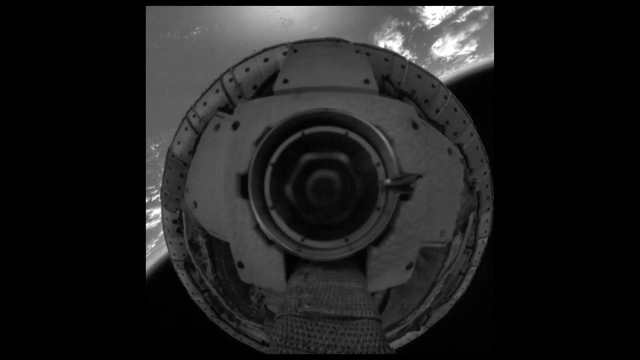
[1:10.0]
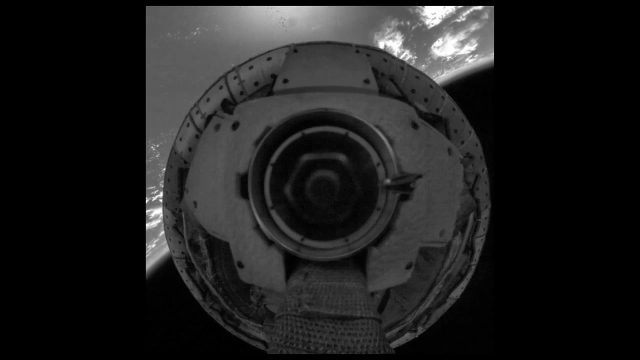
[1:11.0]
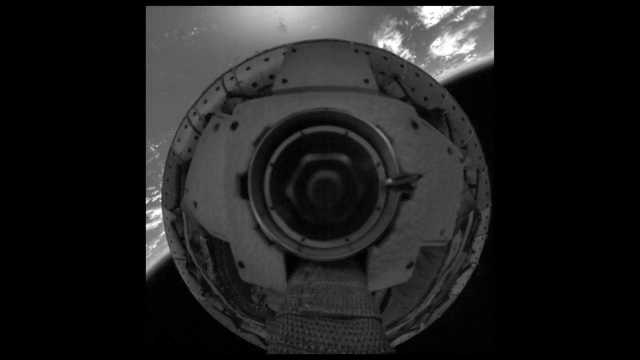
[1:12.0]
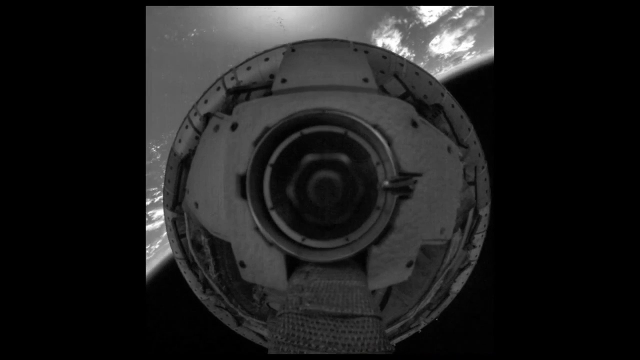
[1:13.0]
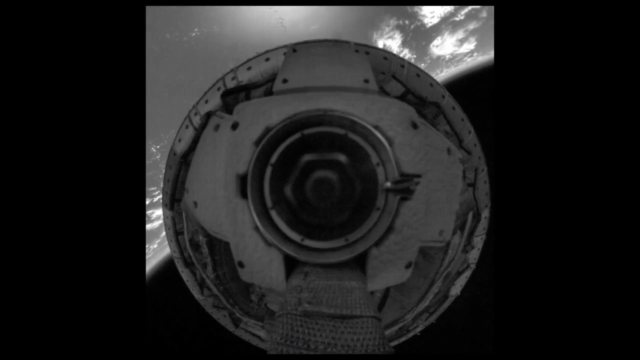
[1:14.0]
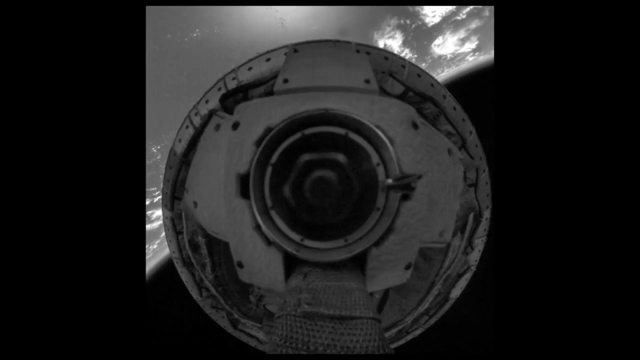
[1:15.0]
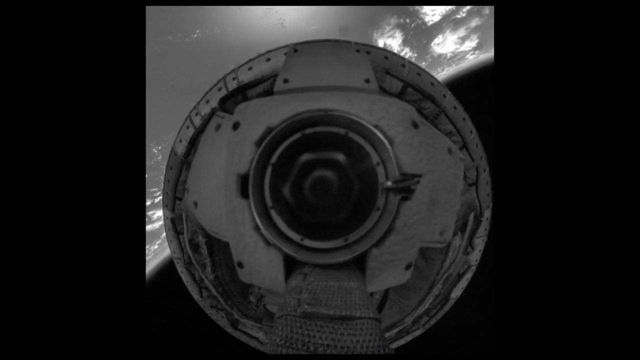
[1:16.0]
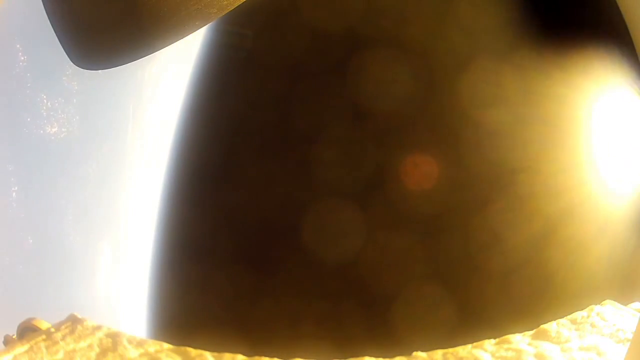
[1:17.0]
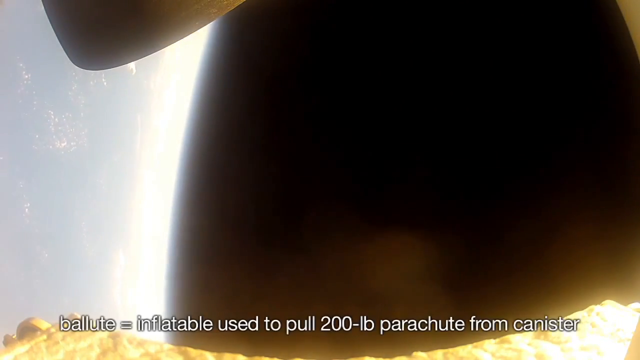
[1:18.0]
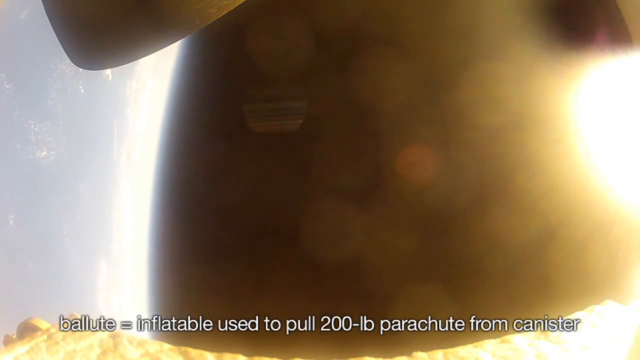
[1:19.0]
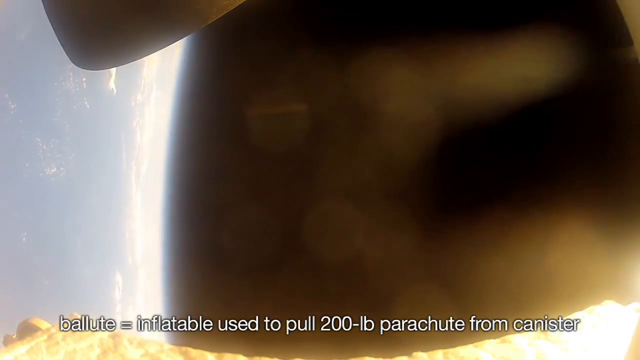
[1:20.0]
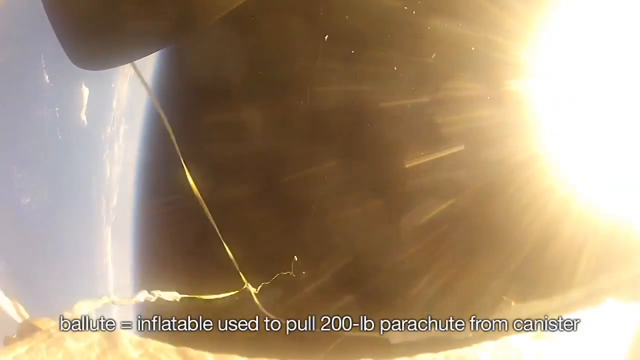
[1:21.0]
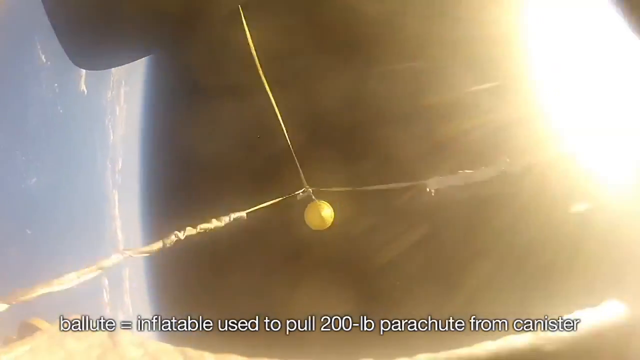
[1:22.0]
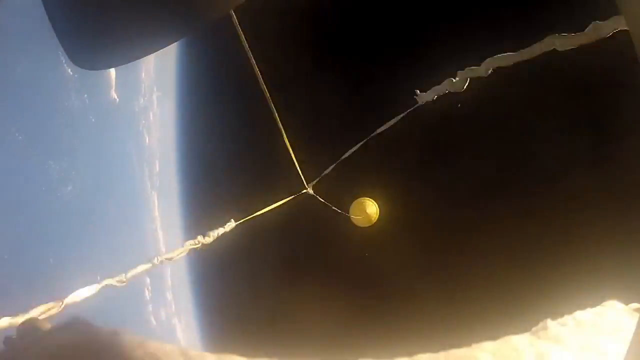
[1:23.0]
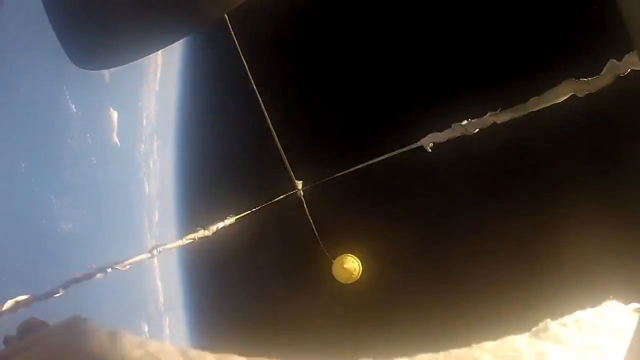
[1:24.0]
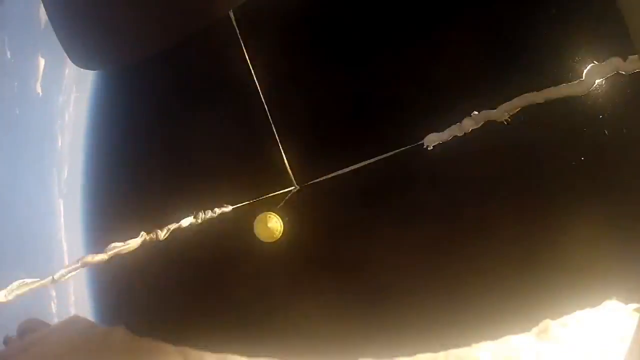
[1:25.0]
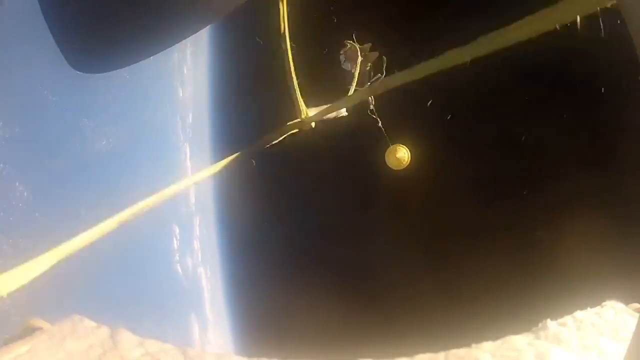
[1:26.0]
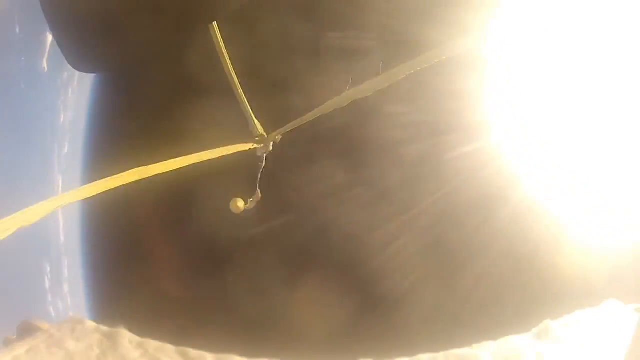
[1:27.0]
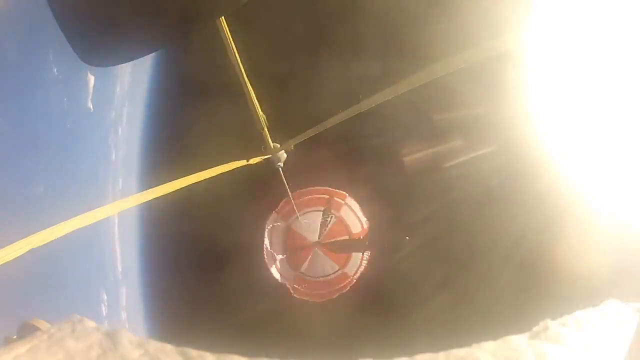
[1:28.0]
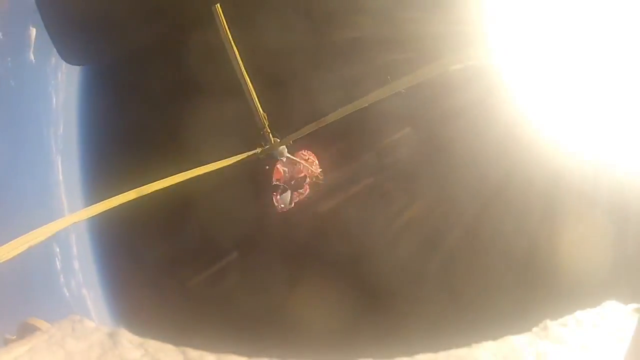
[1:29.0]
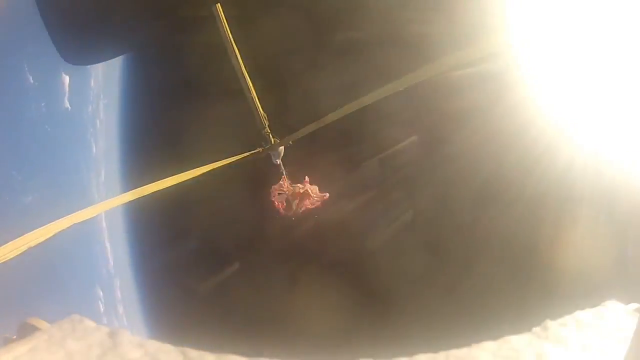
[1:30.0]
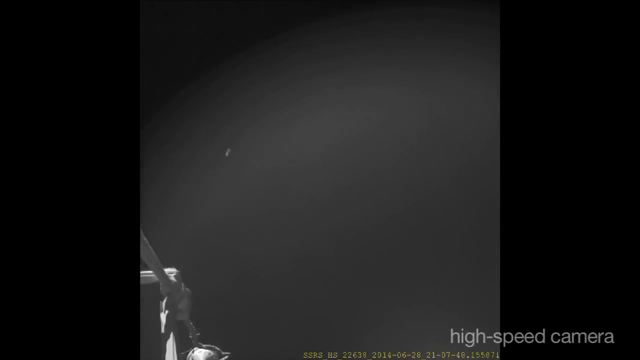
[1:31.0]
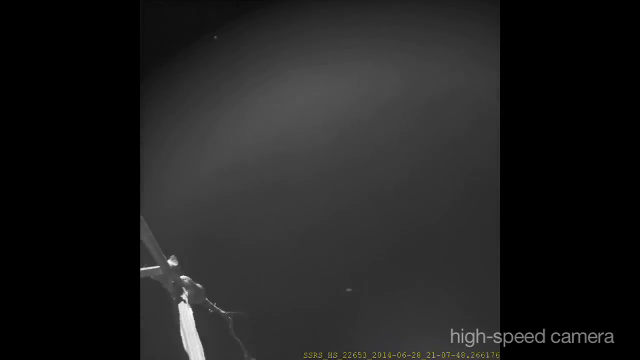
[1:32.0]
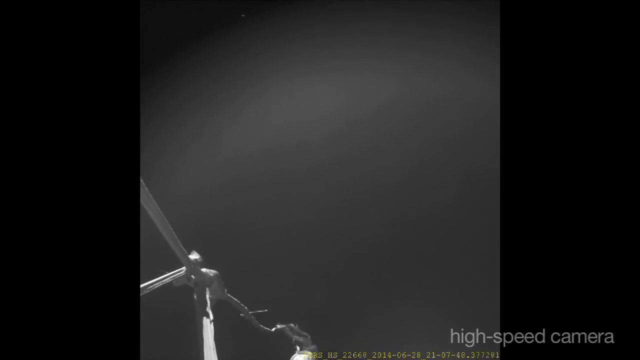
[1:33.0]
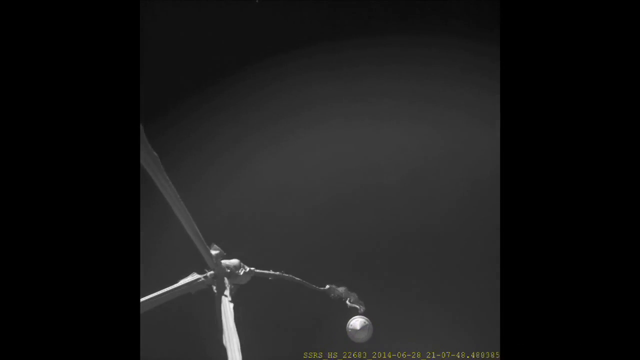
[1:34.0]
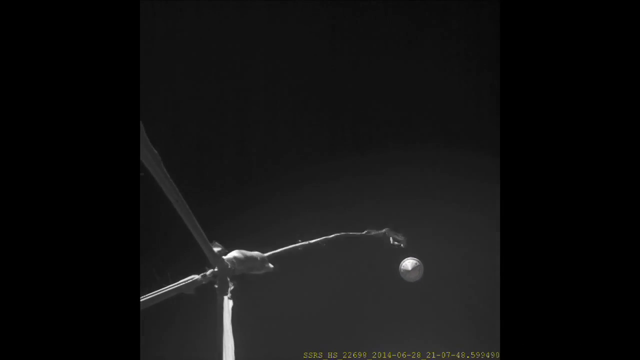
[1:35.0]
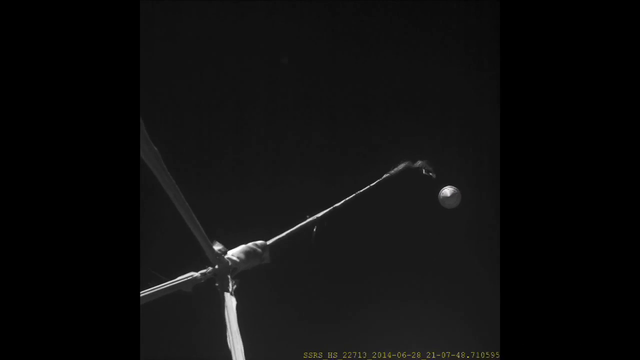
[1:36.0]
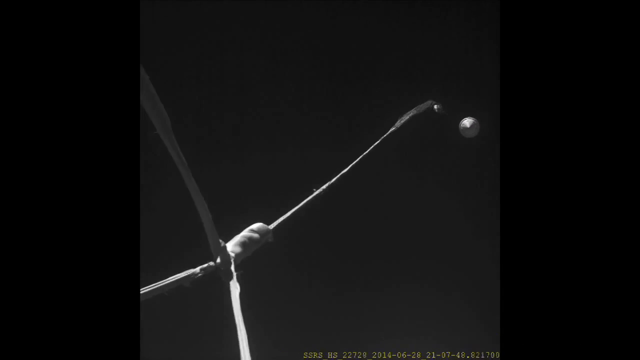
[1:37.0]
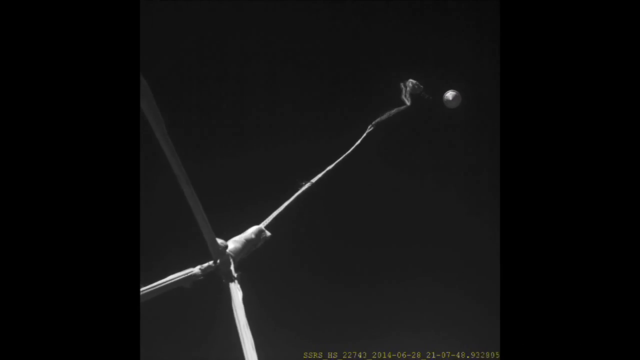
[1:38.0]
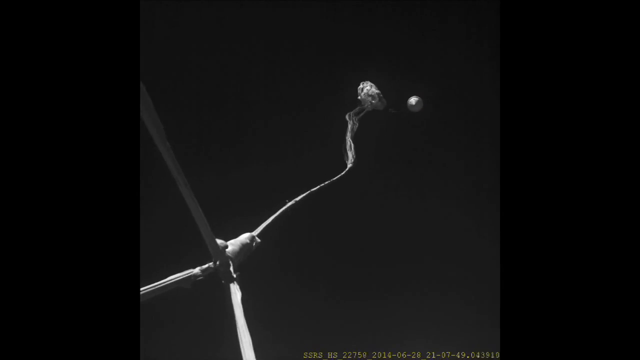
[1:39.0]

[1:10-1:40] The black-and-white image continues, showing what looks like a metal eyeball above the Earth with a floating device around it. Then a blurry black part of space appears, with a white light of the Earth on the left and a yellow glow of the thrusters on the left. Text at the bottom of the image defines a term as "inflatable used to pull 200 pound parachute from the canister." From the spaceship's point of view, something comes out with three ropes attached to it, leading to a long rope and some sort of yellow circular thing. The rope lets out more, and a parachute comes out attached to the three ropes. A different angle shows some of the ropes attaching the parachute; in this black-and-white image it kind of dangles in space, slowly letting the parachute out.